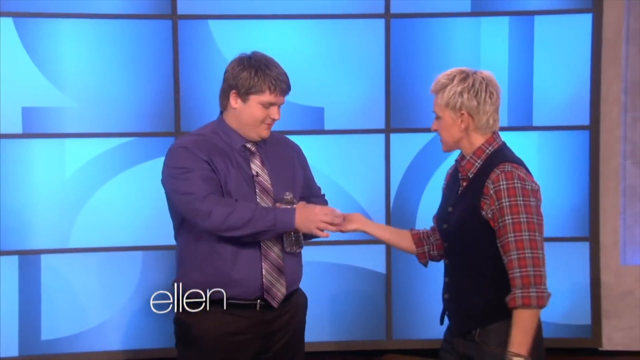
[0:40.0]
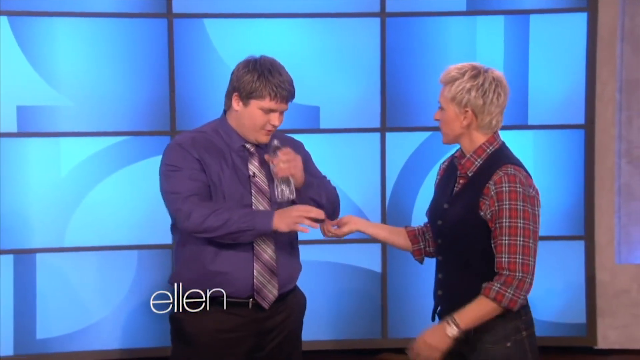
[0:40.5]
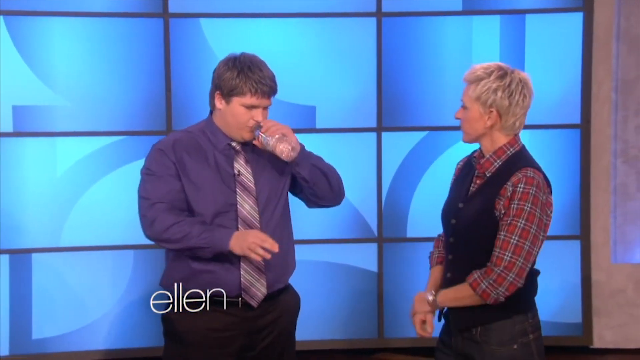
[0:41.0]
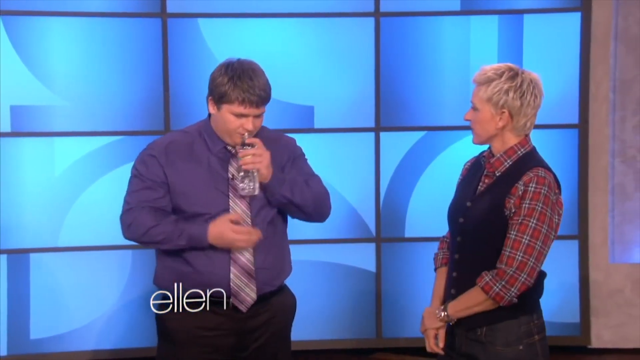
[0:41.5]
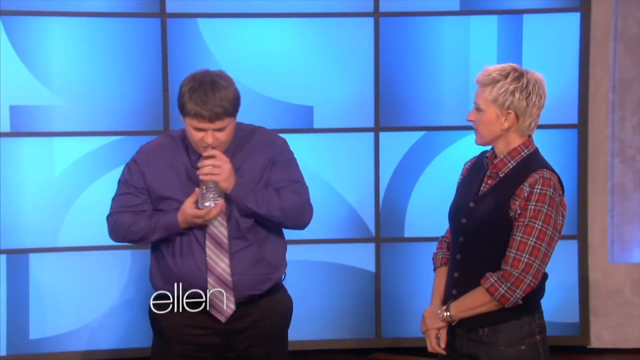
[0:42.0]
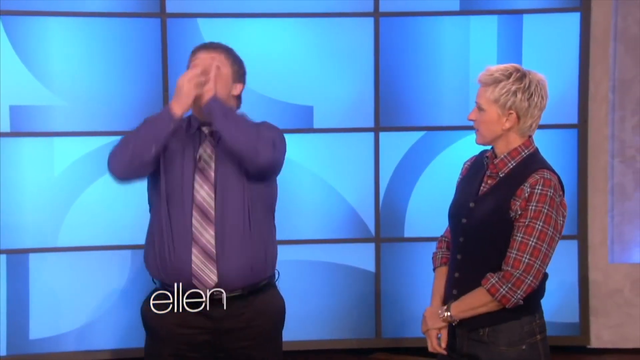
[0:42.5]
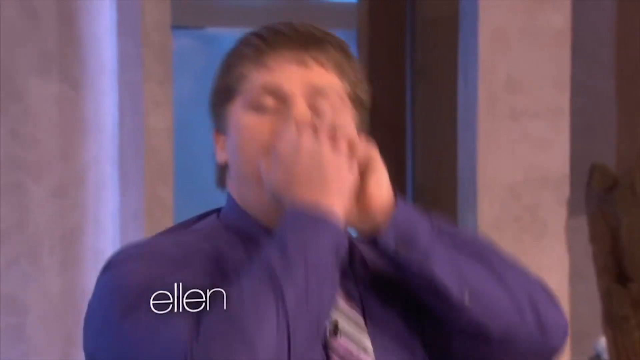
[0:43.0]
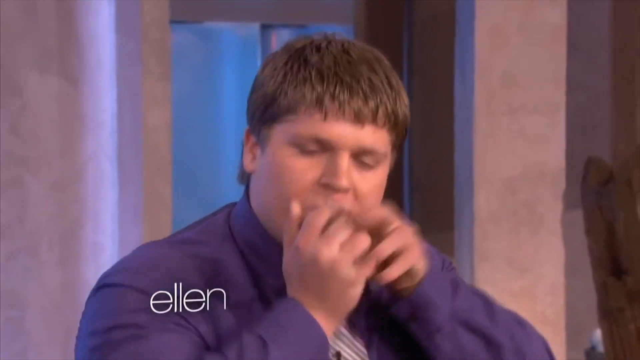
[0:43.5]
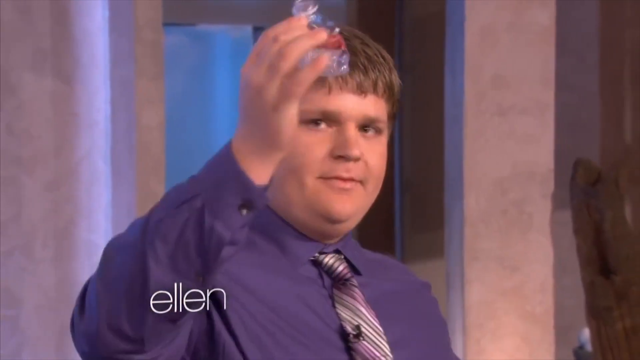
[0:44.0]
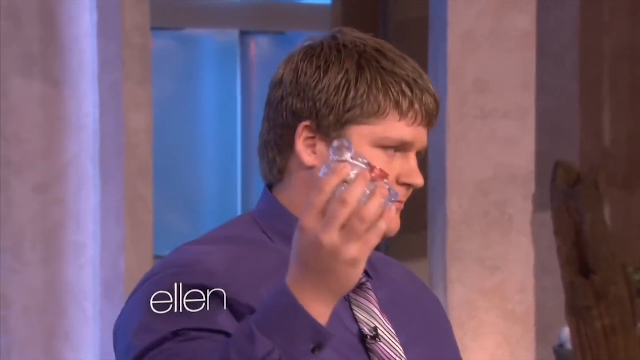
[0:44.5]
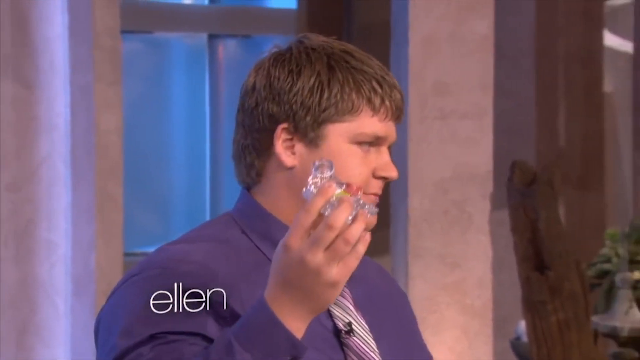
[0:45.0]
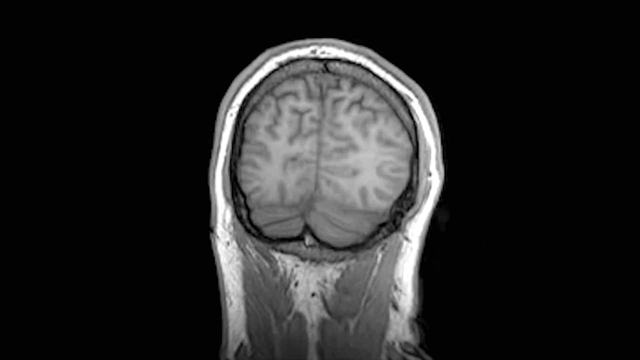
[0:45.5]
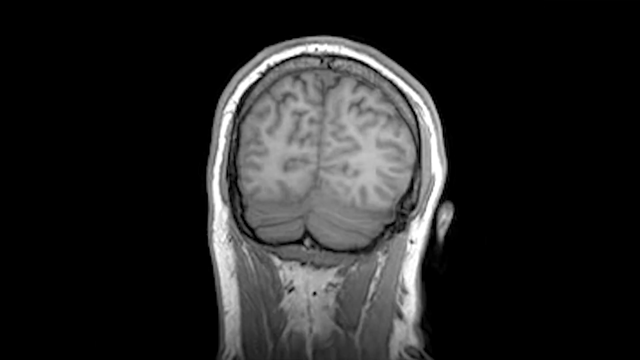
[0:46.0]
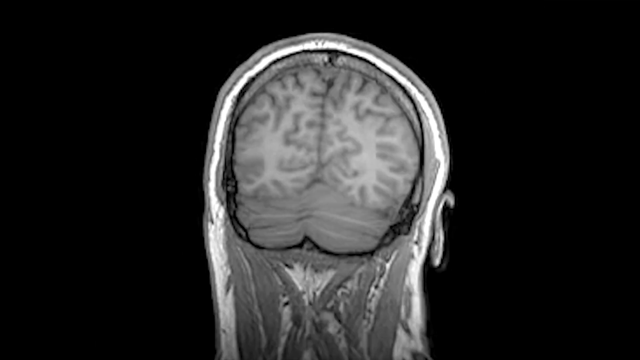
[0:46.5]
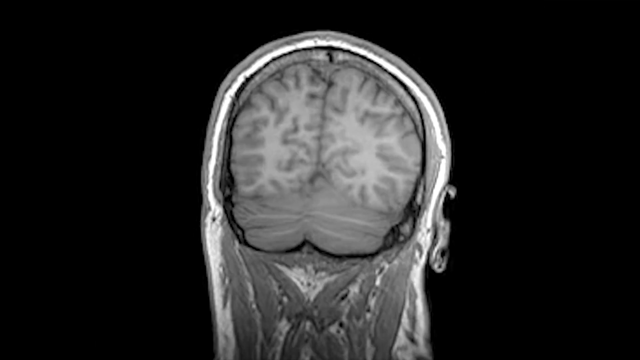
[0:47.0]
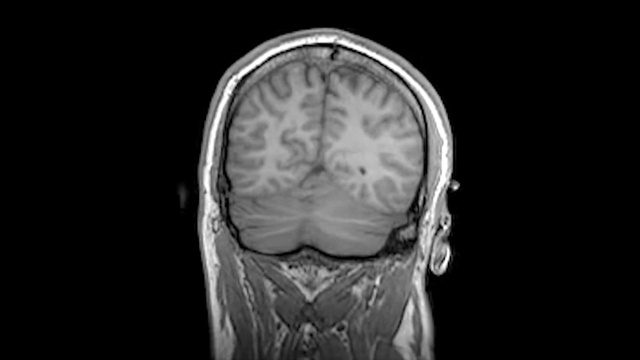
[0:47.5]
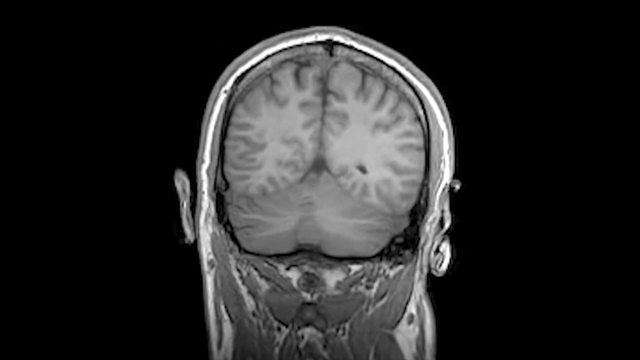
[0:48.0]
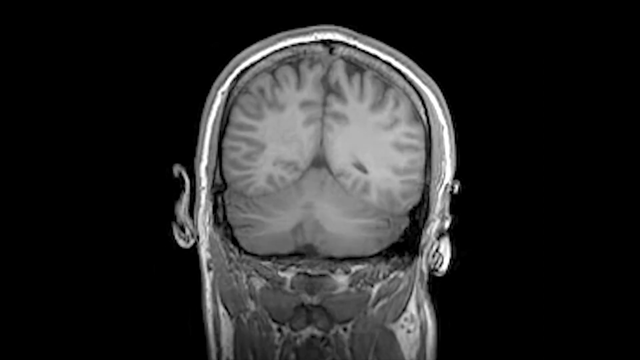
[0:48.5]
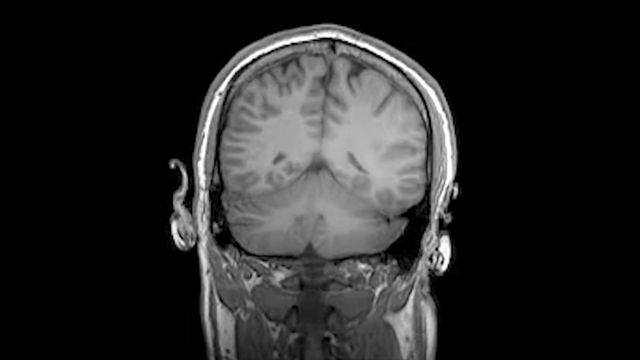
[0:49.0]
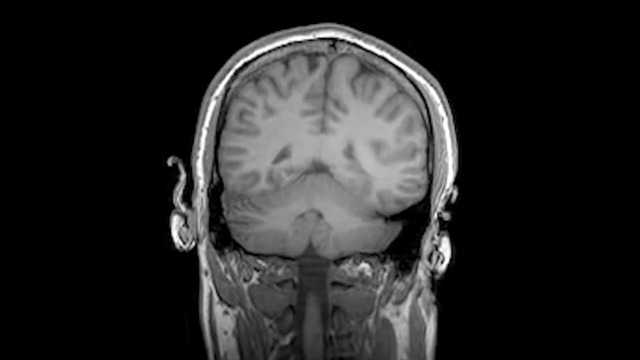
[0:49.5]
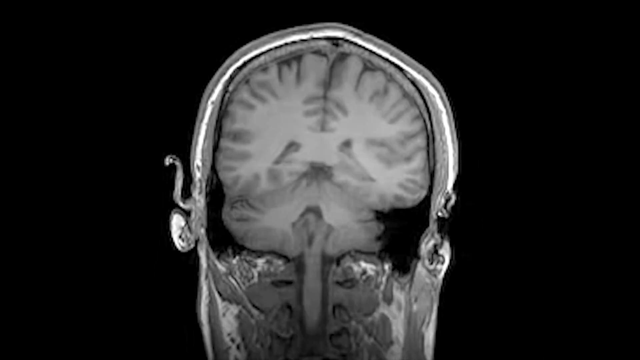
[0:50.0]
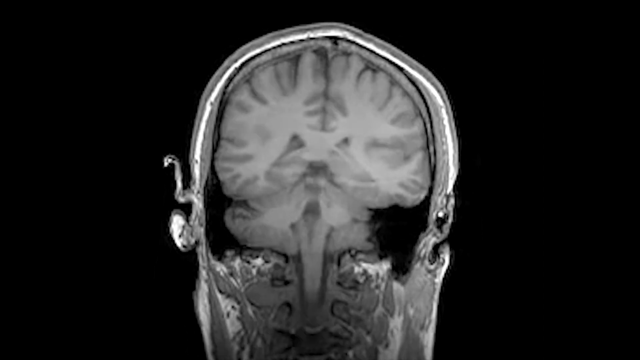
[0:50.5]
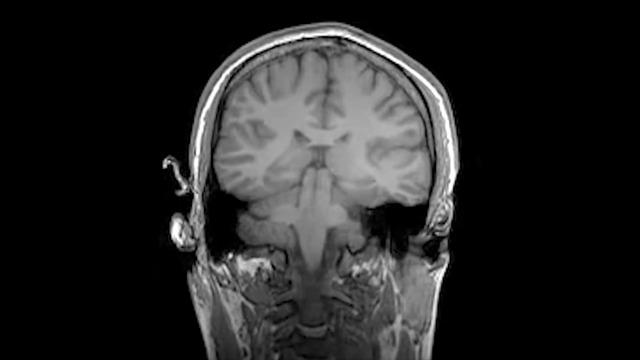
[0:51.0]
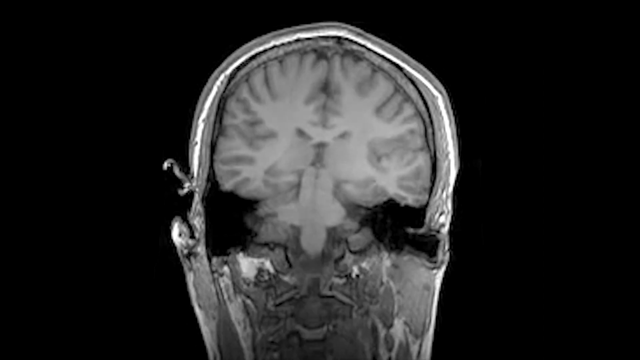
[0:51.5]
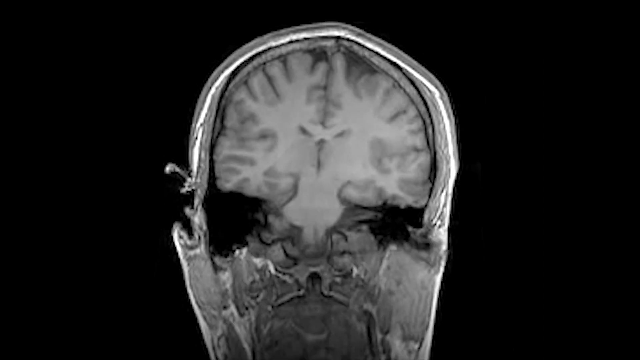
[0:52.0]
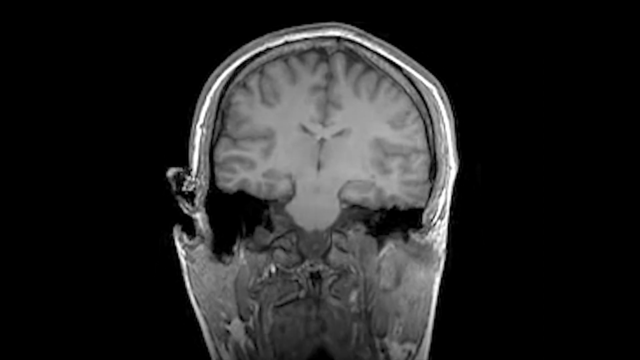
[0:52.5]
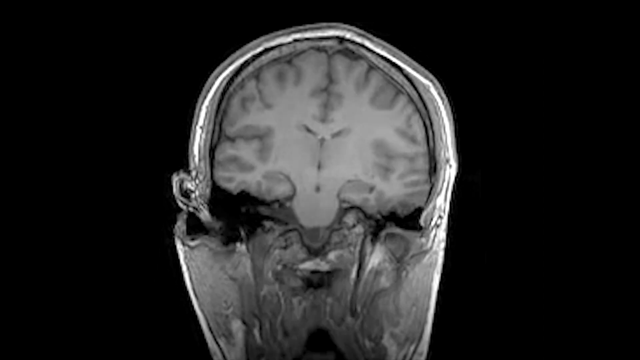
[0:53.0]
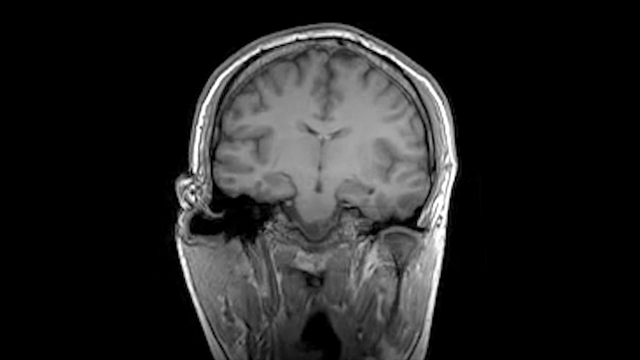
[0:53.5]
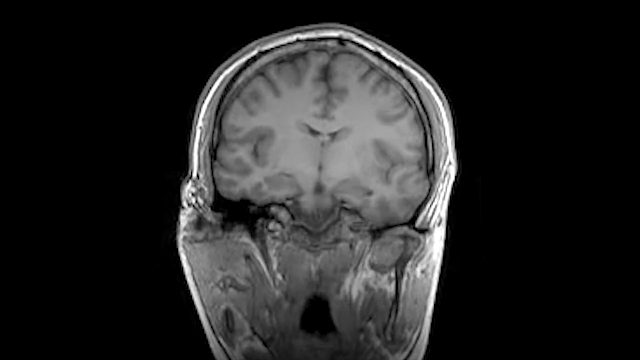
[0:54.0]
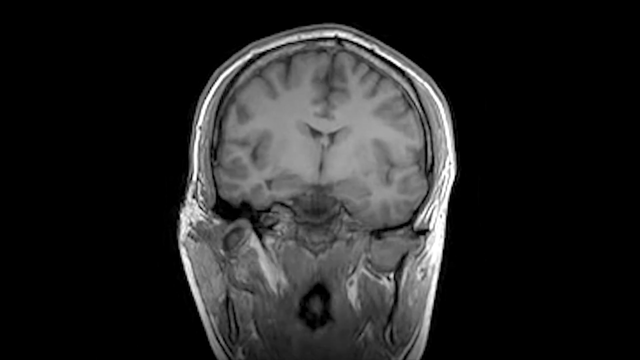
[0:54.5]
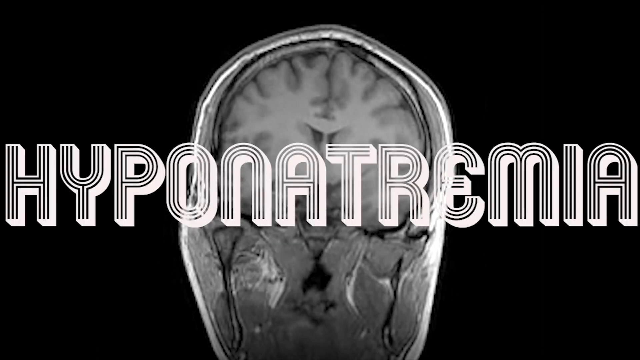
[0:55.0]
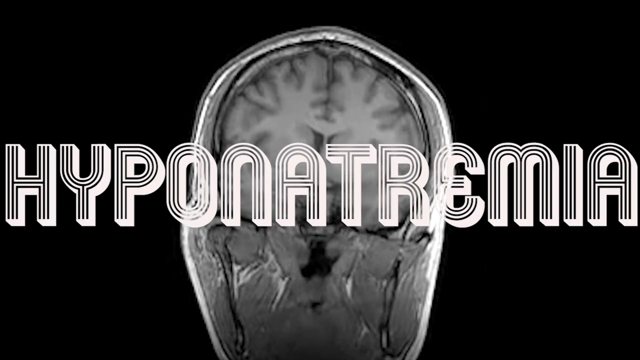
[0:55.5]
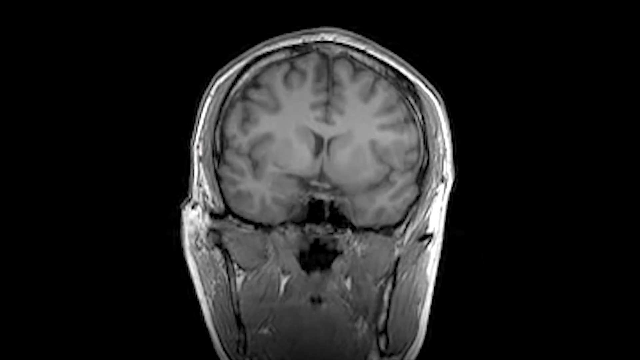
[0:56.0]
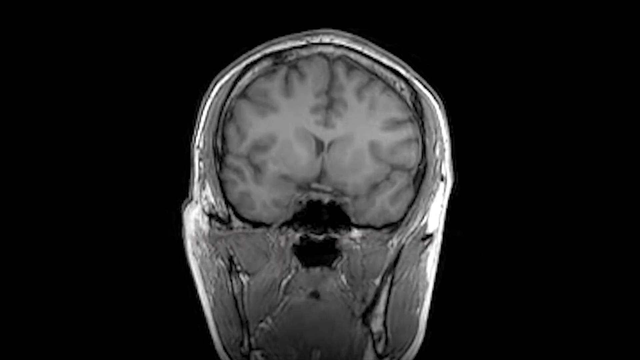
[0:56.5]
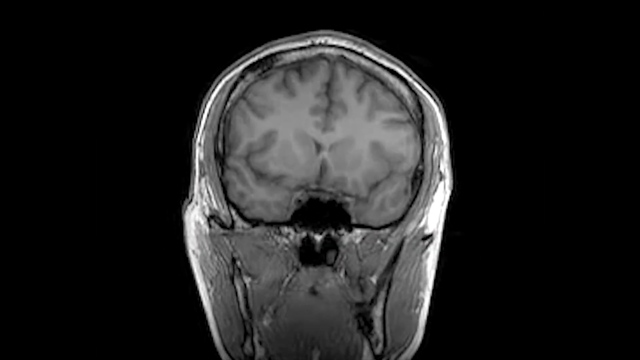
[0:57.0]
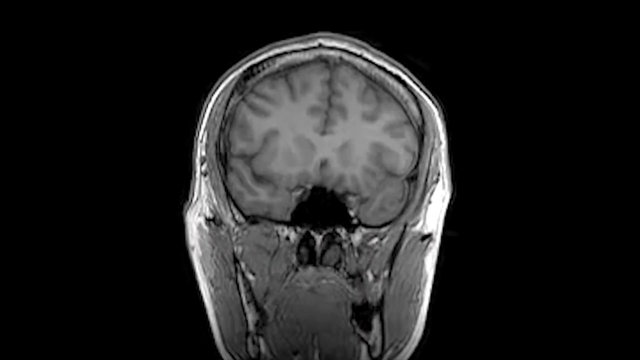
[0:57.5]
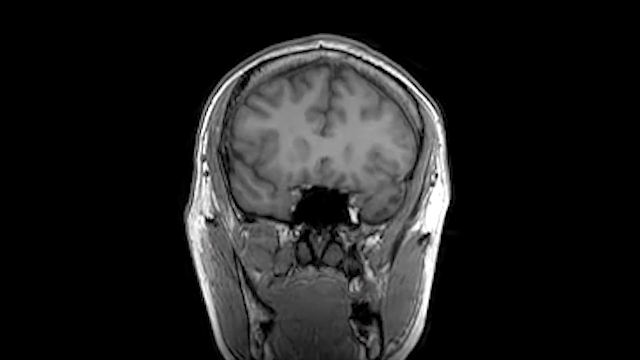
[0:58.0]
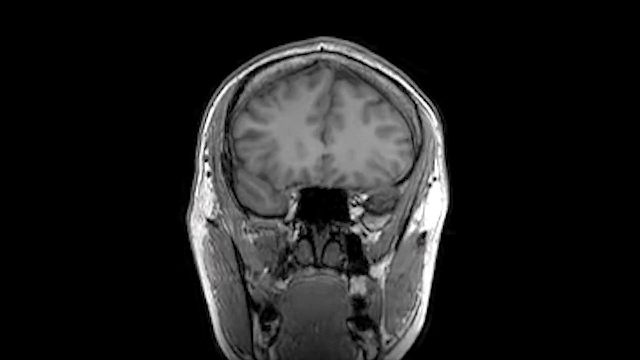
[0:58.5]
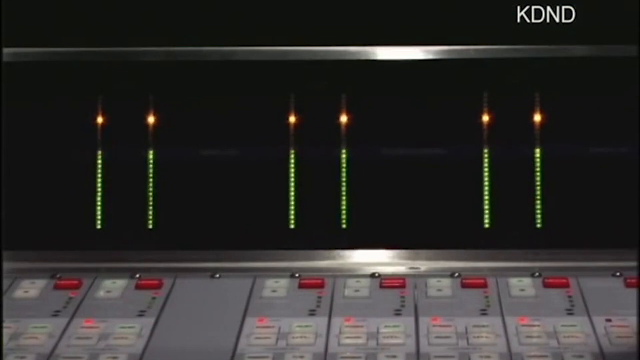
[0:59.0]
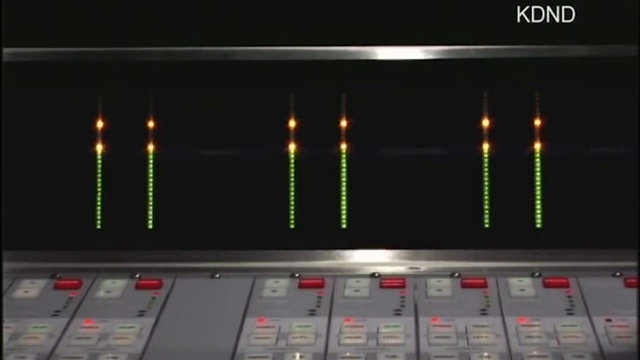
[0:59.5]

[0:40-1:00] Two people are in a studio: on the right is Ellen, host of the show Ellen, and on the left is a man handing her a white water bottle cap. She holds her right hand out as the man, holding the cap in his right hand, places it into her open palm. In his left hand the man holds a plastic water bottle missing its cap. Behind them is a wall of flat-screen TVs all showing a blue background. The man uses his left hand to bring the bottle up to his head and takes a sip, then immediately moves his right hand to the base of the bottle and pushes and crushes it until all the water has gone down his mouth in one go. He then holds the crushed bottle up to the camera with his right hand. The video cuts to a gray MRI of someone's brain, slowly going layer by layer through the brain as it scans it.